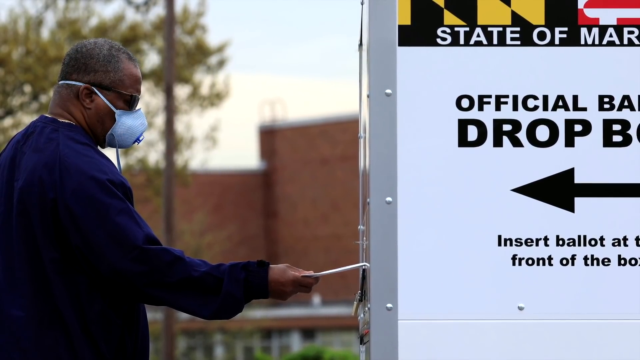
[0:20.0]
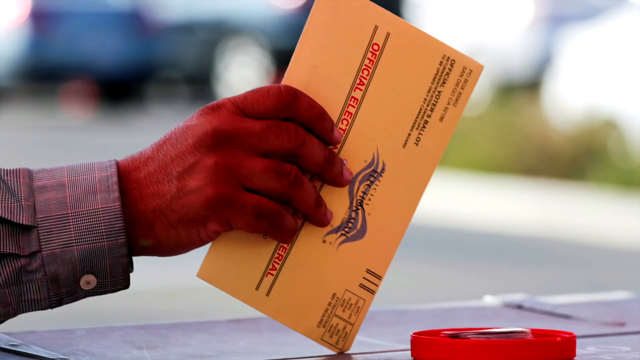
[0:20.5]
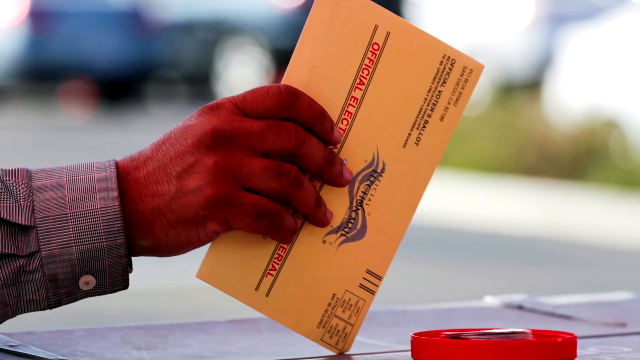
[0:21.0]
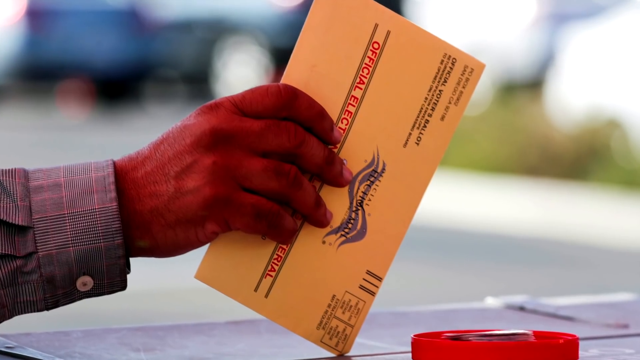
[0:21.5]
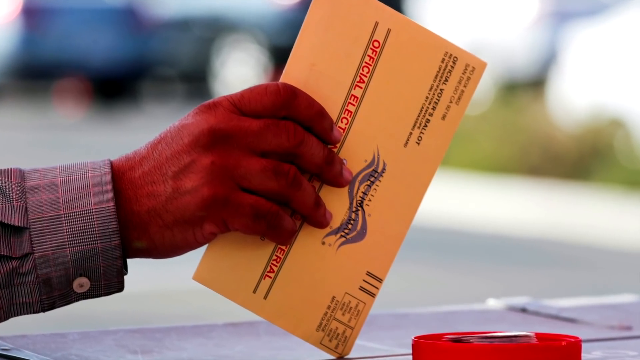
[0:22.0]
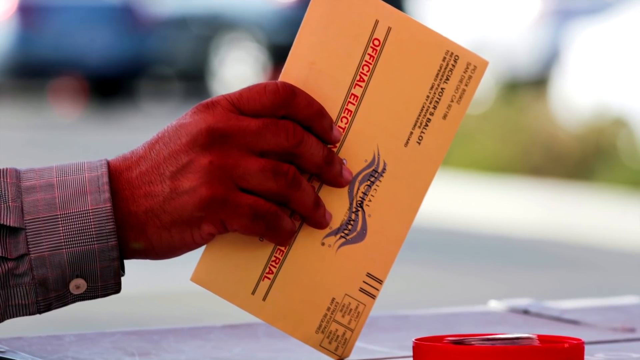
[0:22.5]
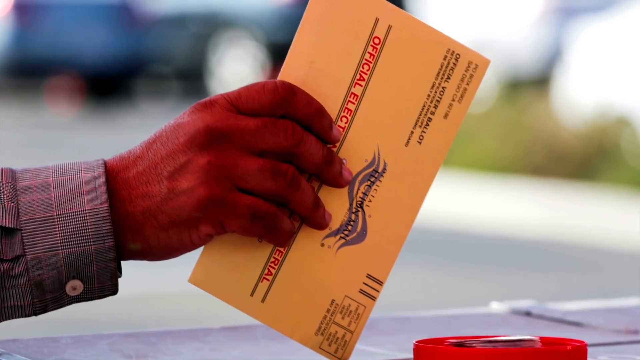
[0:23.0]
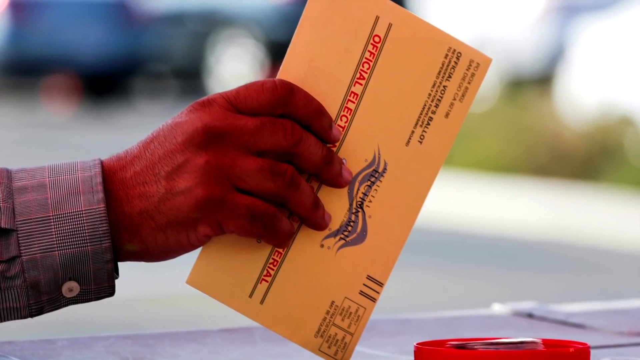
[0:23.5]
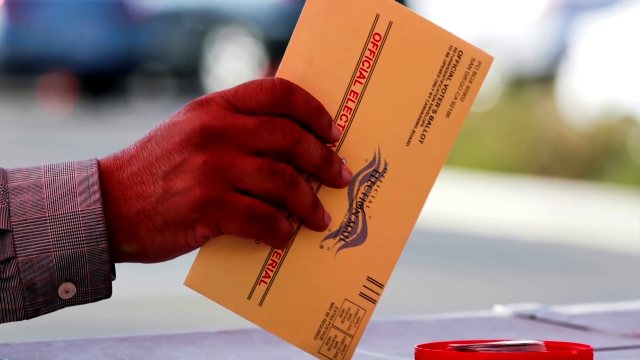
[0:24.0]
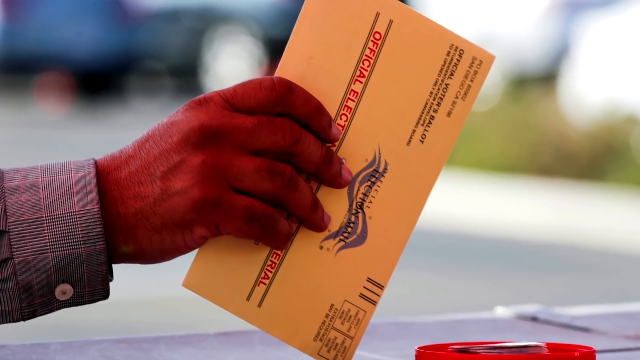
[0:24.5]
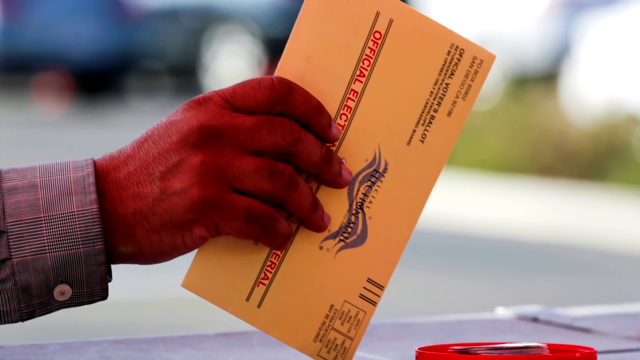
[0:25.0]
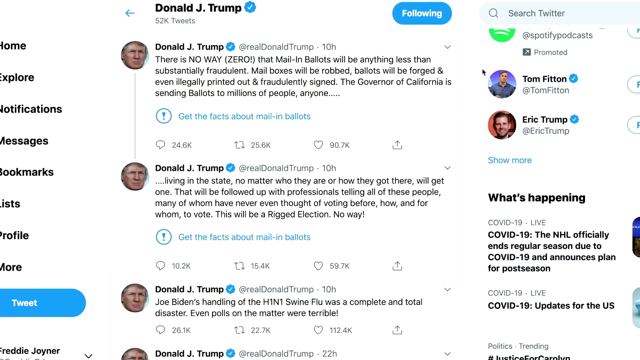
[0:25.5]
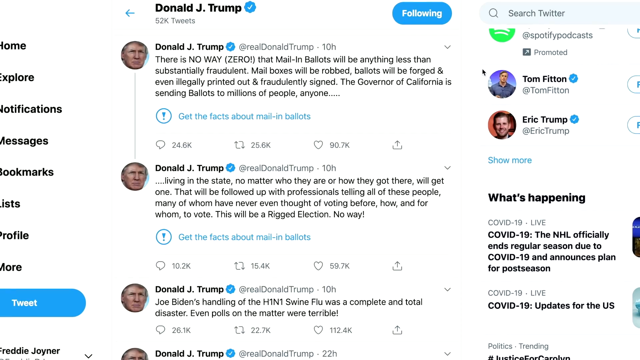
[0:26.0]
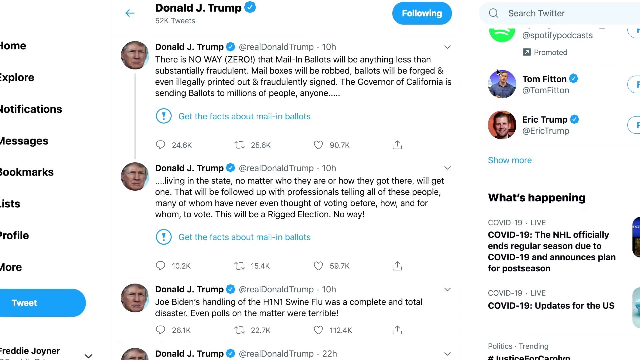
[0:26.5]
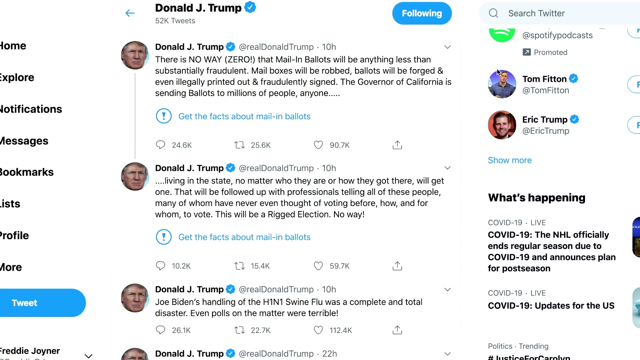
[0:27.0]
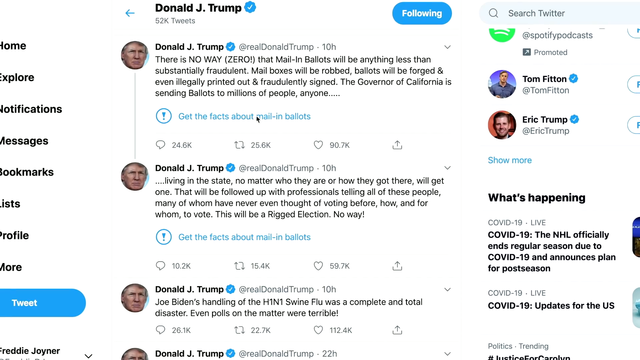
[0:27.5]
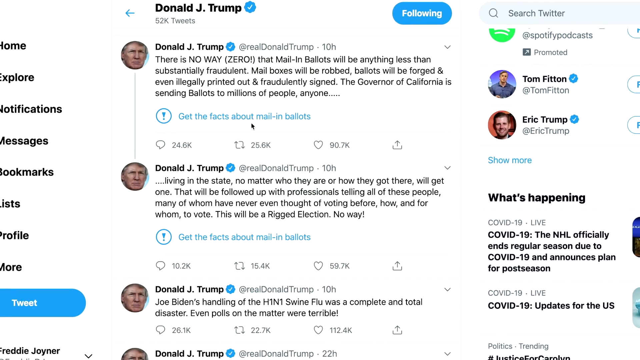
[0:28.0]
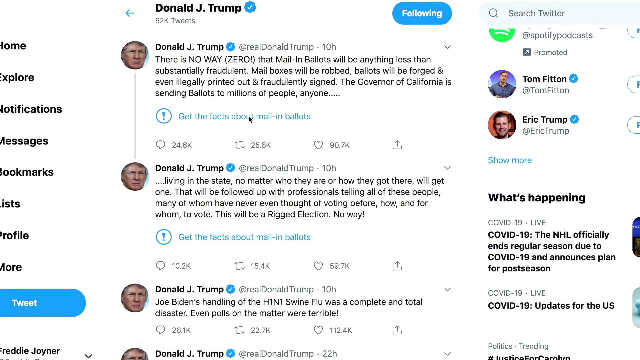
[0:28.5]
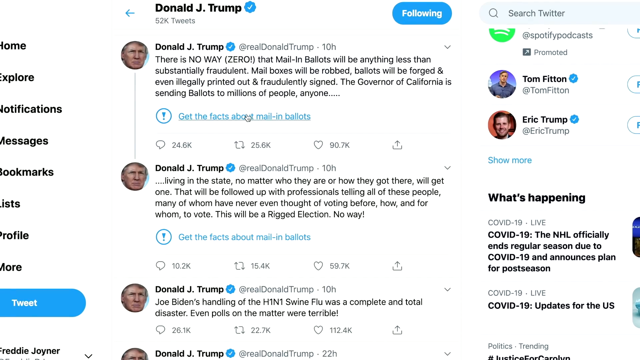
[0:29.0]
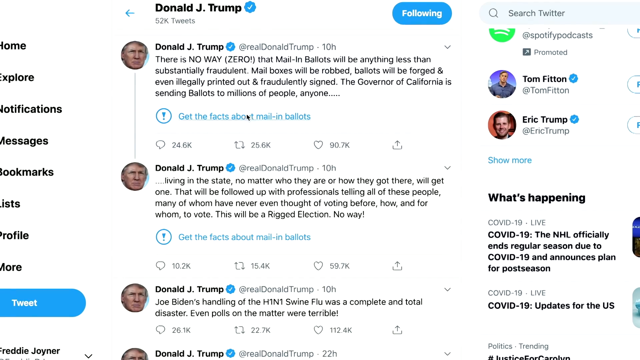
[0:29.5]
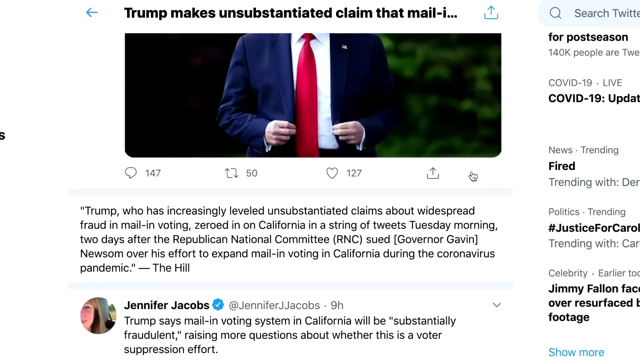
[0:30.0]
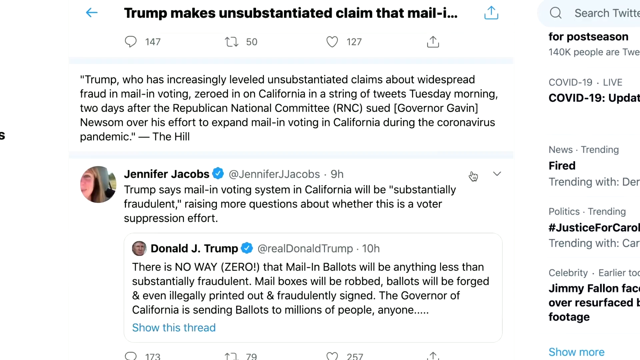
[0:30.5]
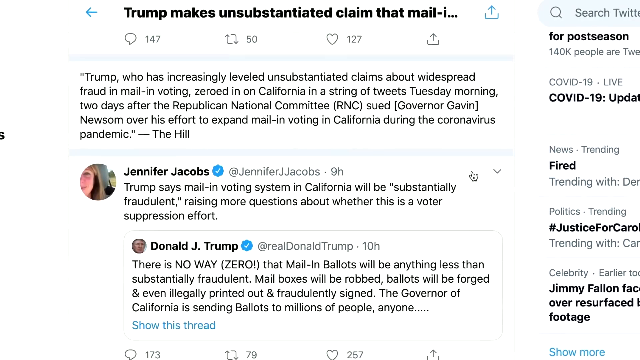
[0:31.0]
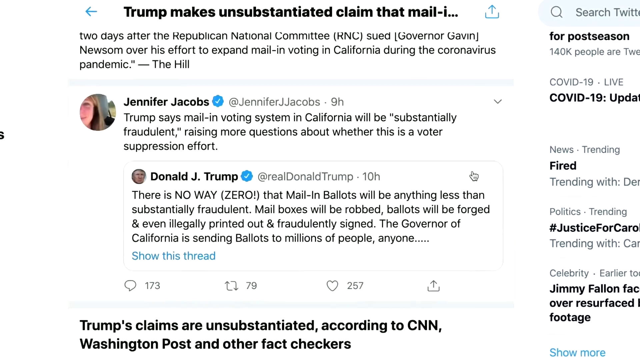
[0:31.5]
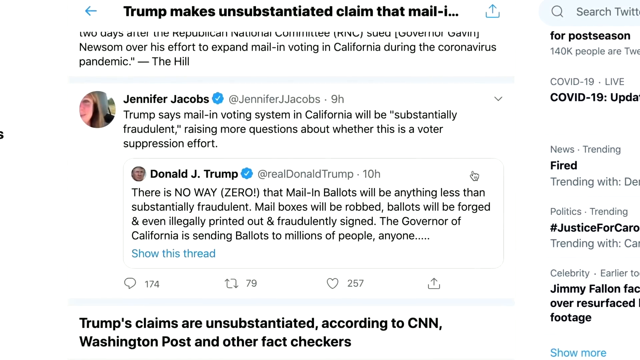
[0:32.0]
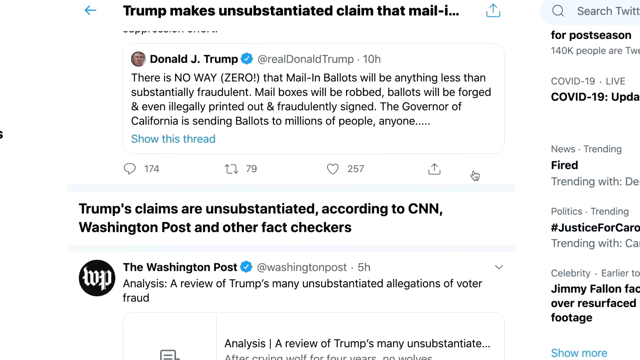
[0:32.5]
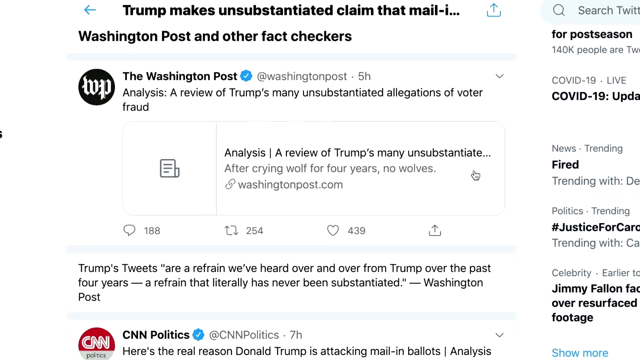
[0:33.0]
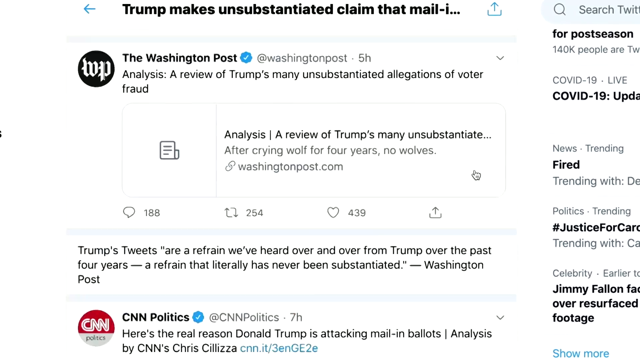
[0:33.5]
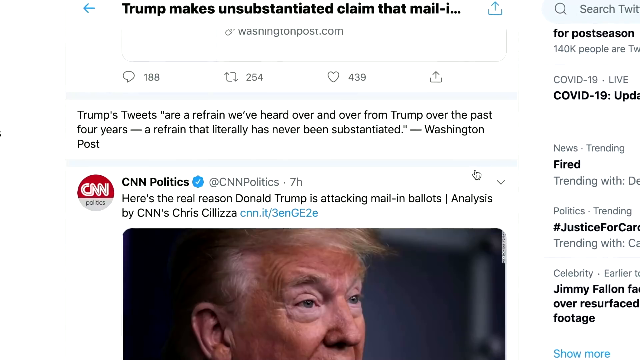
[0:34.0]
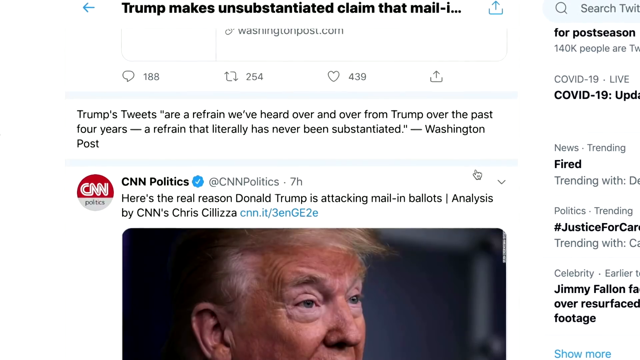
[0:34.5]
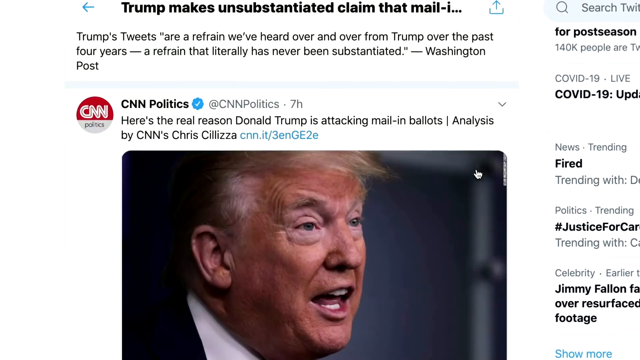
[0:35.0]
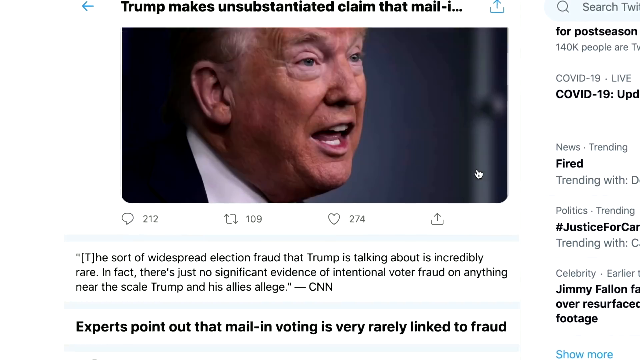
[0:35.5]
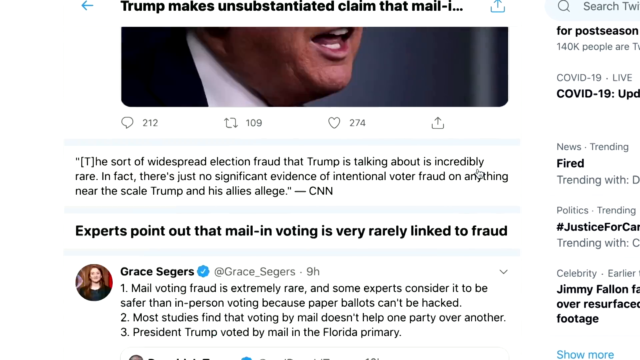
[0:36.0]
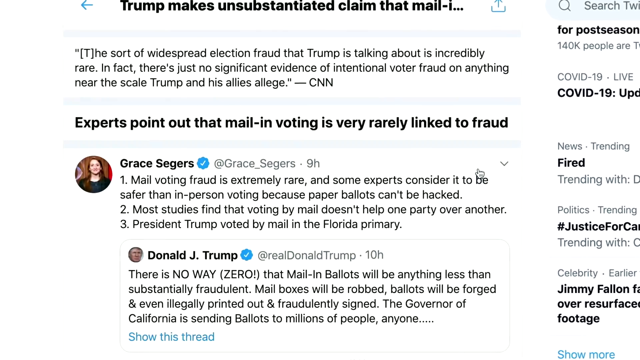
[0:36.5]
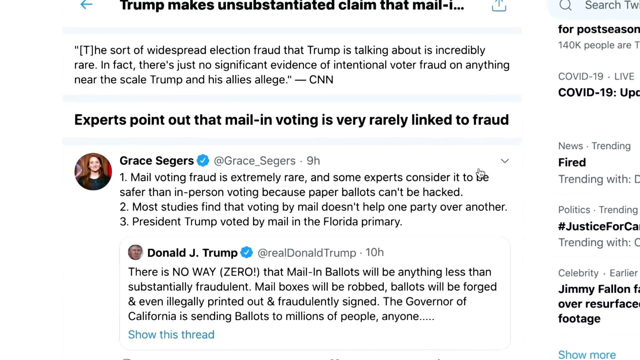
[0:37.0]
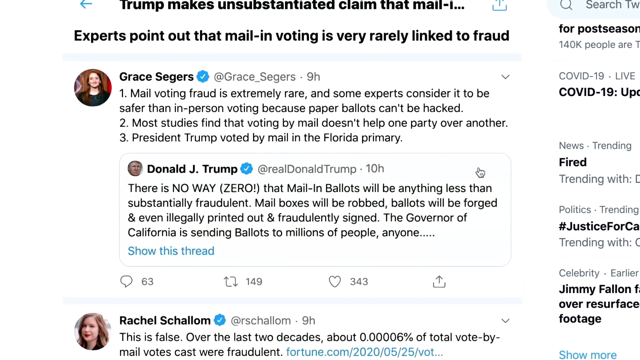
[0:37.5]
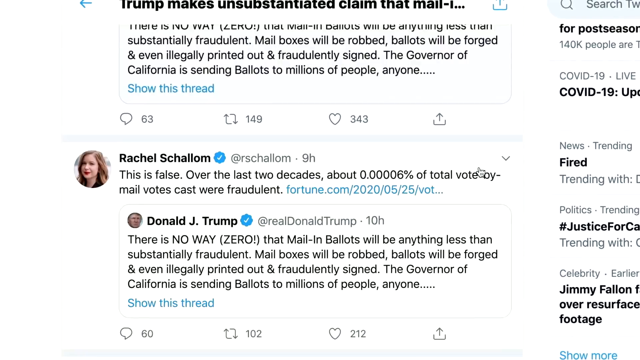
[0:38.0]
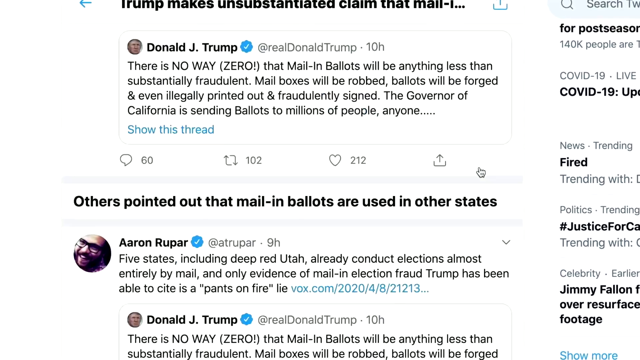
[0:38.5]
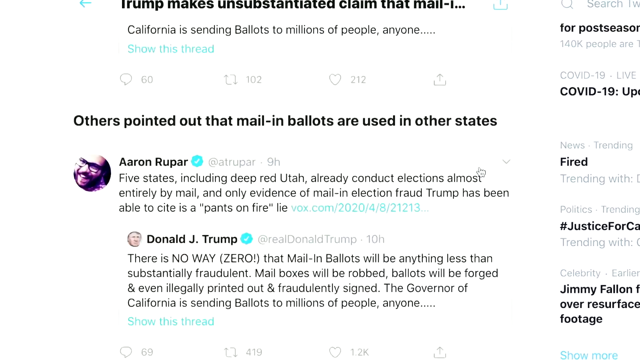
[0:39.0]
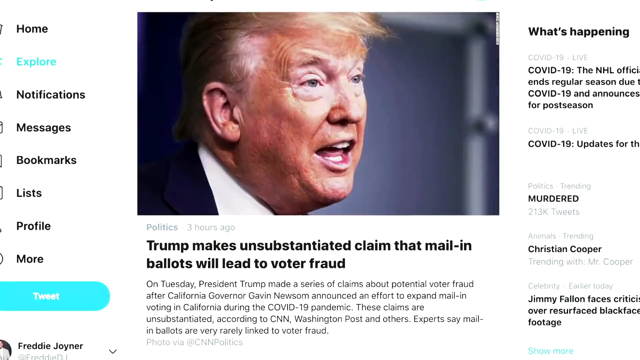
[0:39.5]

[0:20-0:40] A person casts a vote. He is on the left, probably in his early 60s, African-American, with gray and black hair, glasses, and a mask on. He faces the right of the frame with his right hand extended, holding his ballot that he is about to push into the official dropbox in the state of Maryland, which is seen at the upper right-hand corner. Next, a person's right hand holds a yellow official election envelope. In the middle it says "official election", and the hand covers the rest of the text. At the upper part it says "official voters ballot". The hand is an African American right hand, and the person wears a long-sleeve button-down shirt.